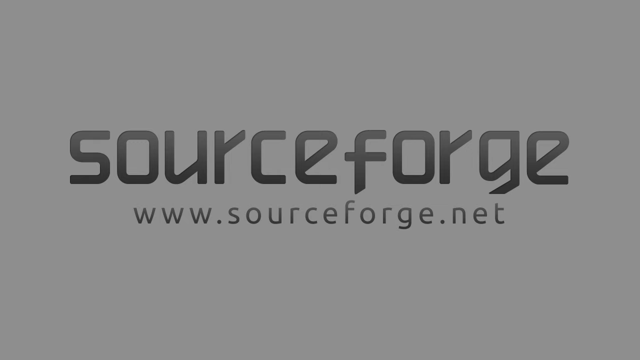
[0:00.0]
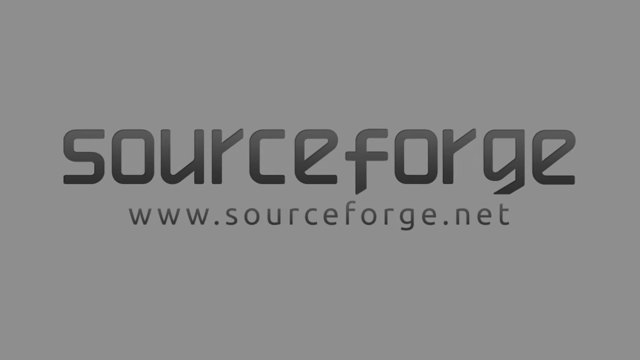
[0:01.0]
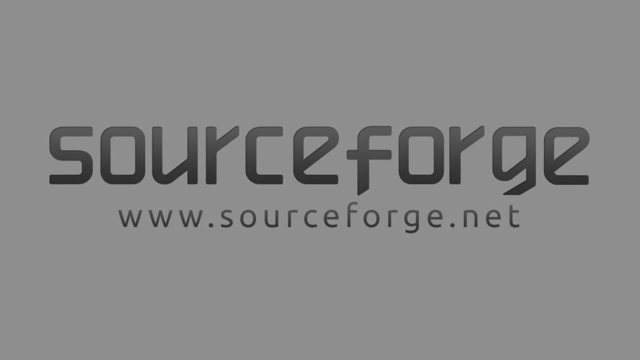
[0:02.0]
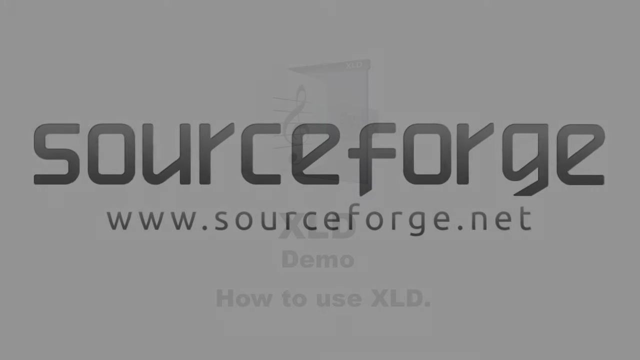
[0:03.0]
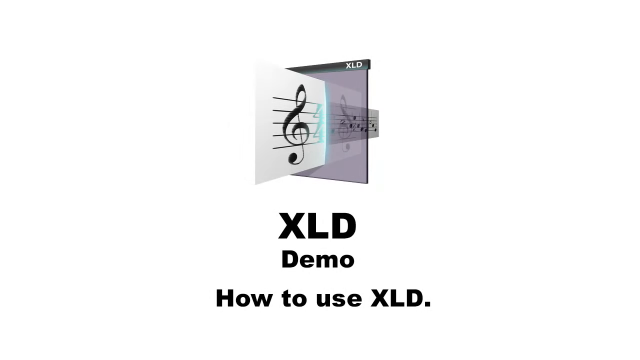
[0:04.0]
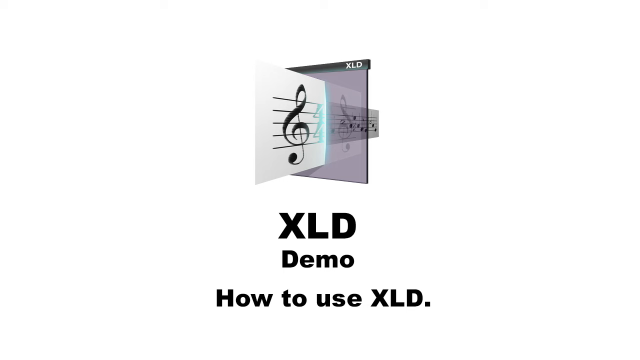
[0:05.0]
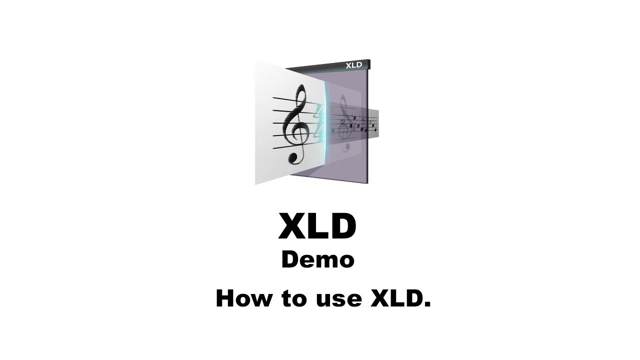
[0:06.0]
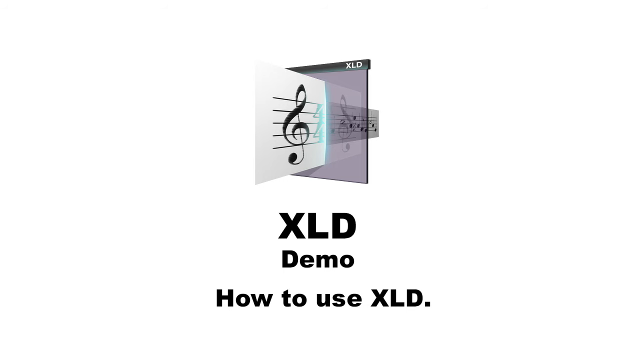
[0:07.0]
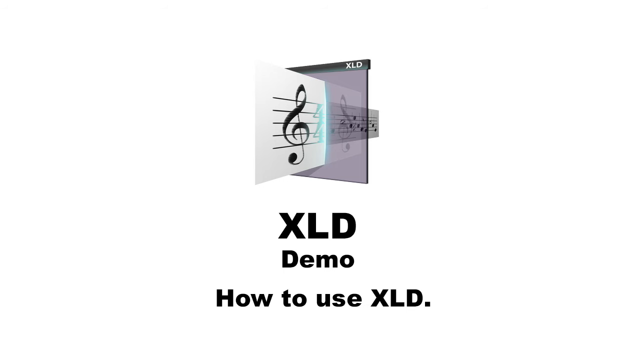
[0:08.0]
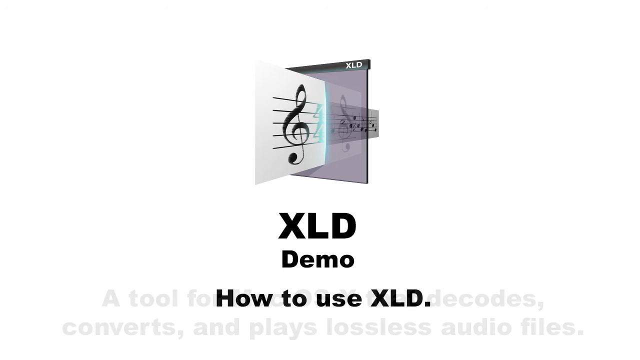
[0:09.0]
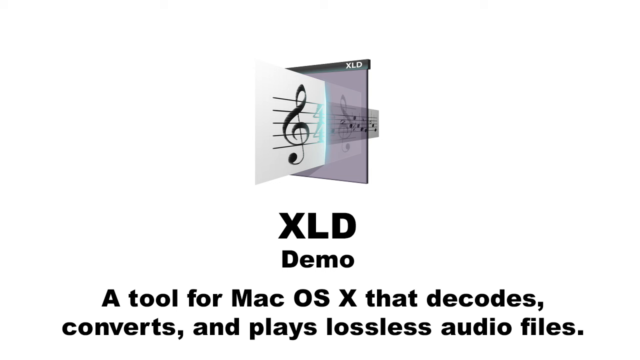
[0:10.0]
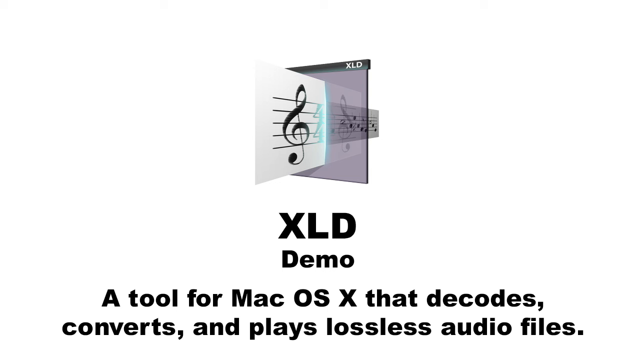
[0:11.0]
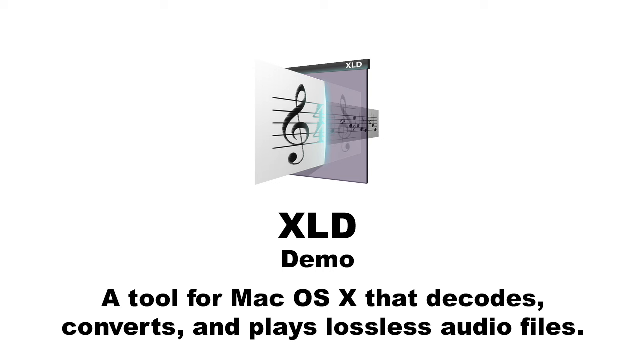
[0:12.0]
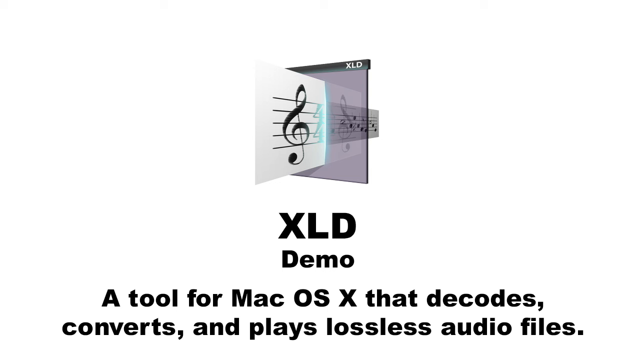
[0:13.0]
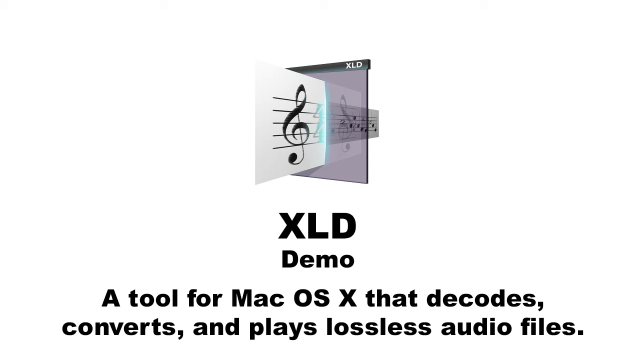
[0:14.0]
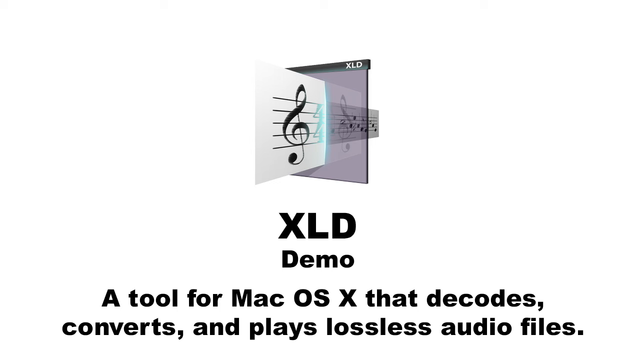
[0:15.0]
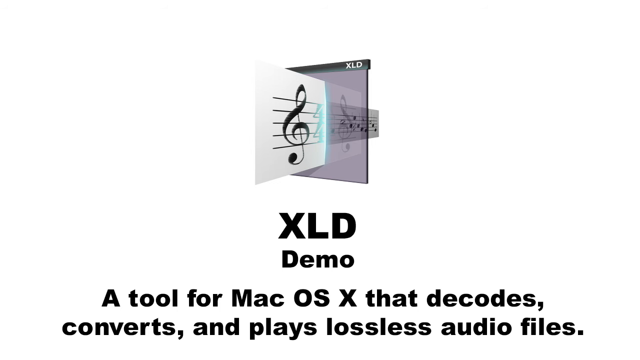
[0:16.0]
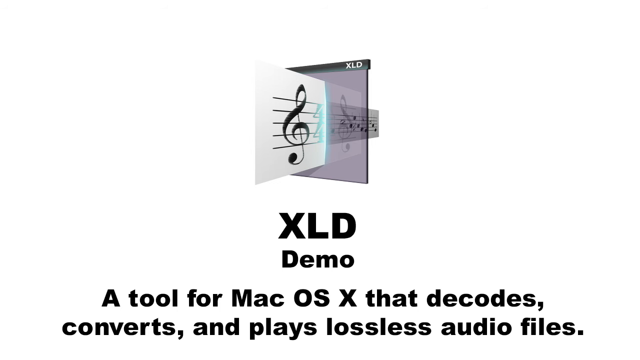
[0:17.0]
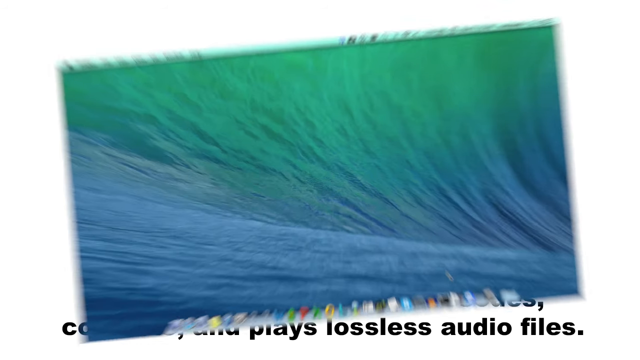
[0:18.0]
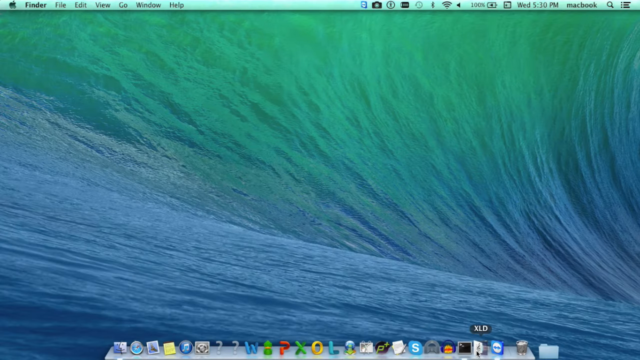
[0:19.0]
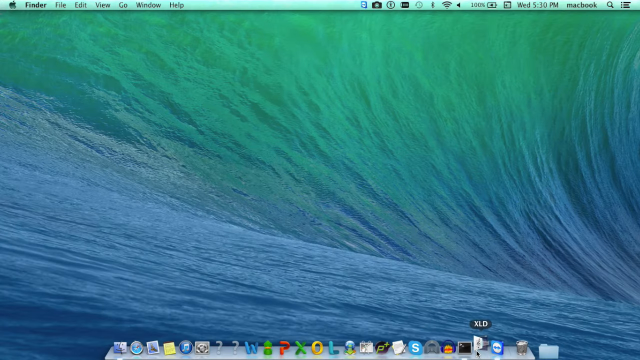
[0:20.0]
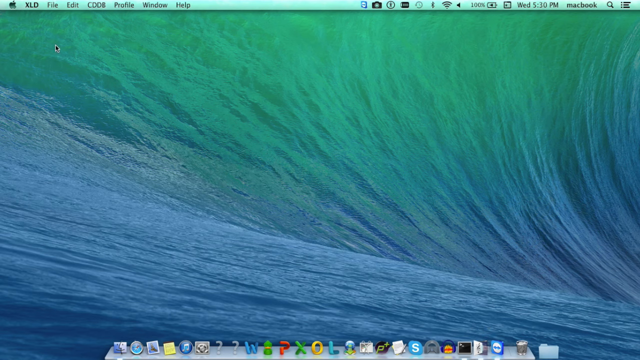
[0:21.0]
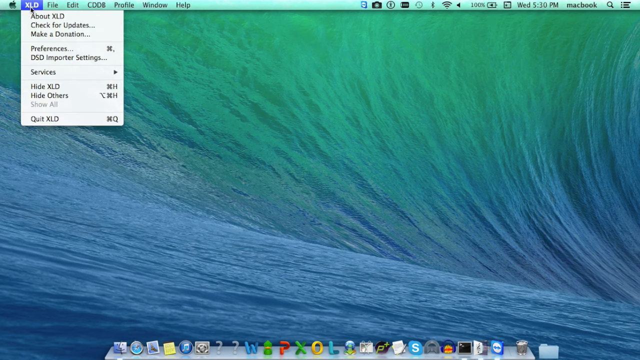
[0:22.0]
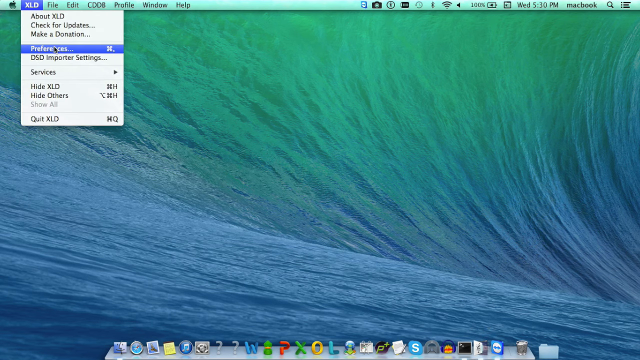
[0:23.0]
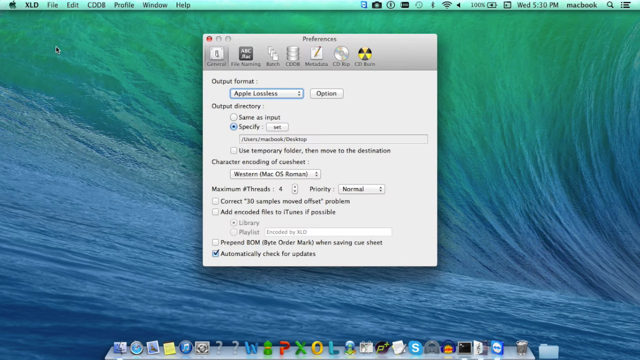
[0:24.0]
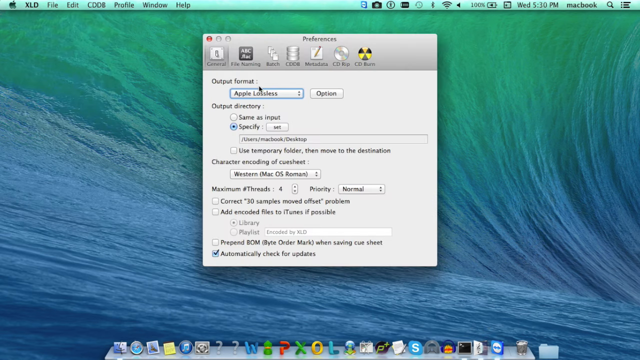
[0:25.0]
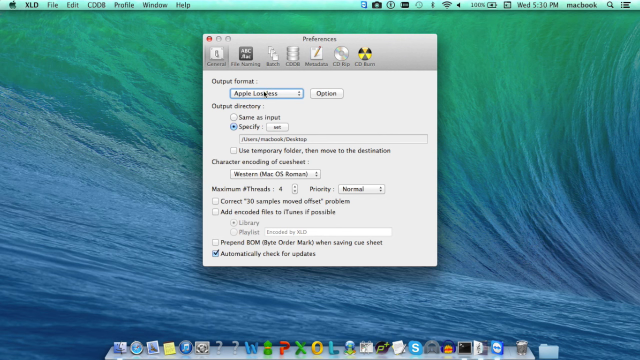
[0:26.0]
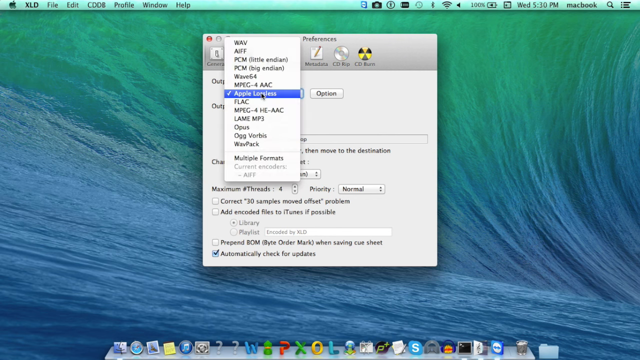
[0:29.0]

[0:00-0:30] The video opens with SourceForge on a gray background, with "sourceforge.net" and "www.sourceforge.net" underneath. Next comes a note diagram with "XLD demo" and "how to use XLD", along with on-screen text describing XLD as a tool for Mac OS X that decodes, converts, and plays lossless audio files. After this title page, a Mac screen appears. In the top left a menu pops up and XLD is selected, then a selection is made. XLD opens in the bottom right. The view then goes to preferences, where a selection apparently is made, though the text is very difficult to read. The shot ends on the Mac screen with preferences open.